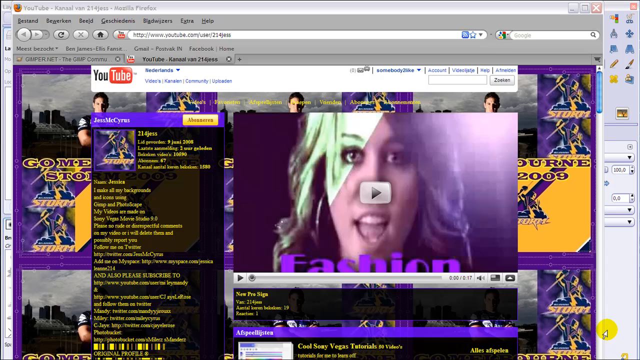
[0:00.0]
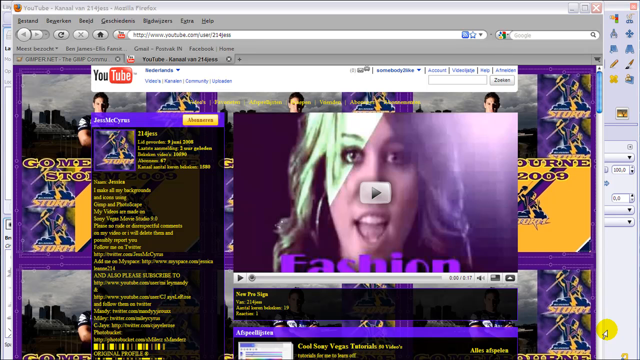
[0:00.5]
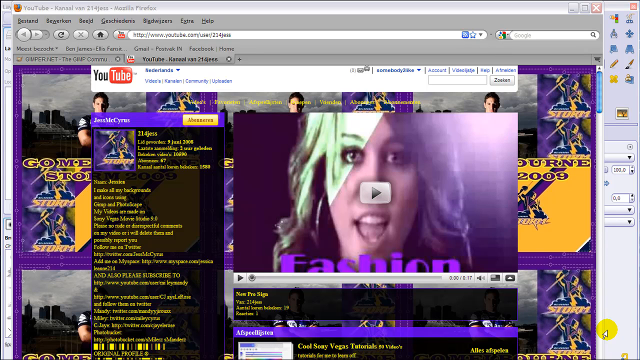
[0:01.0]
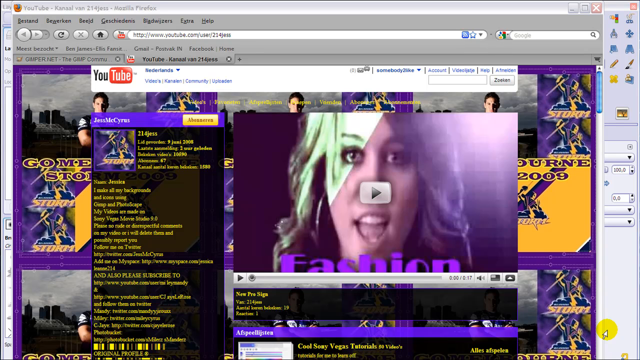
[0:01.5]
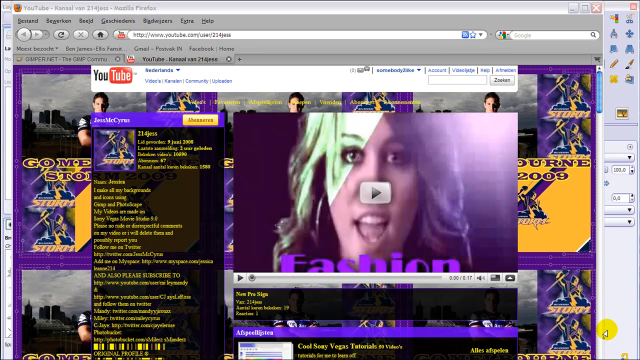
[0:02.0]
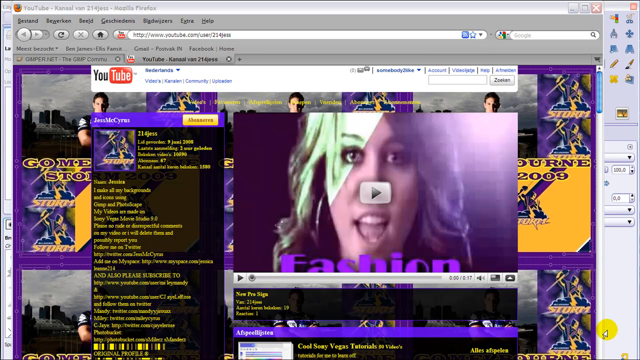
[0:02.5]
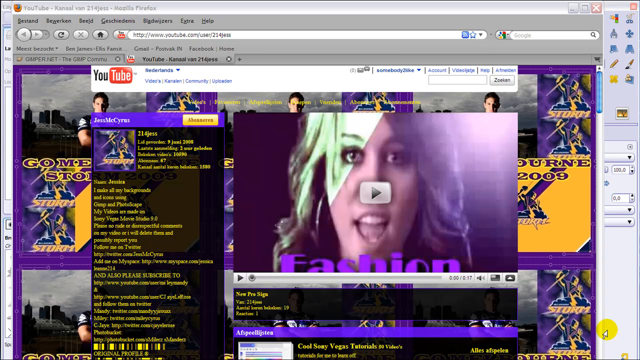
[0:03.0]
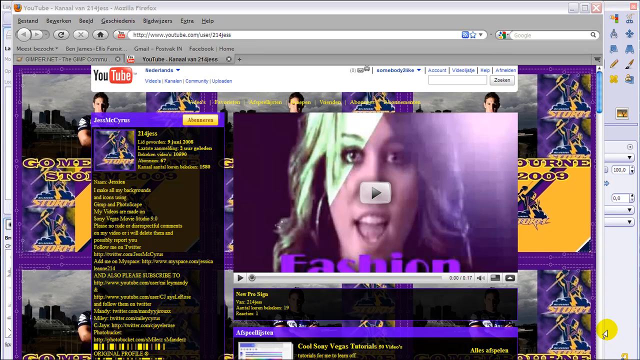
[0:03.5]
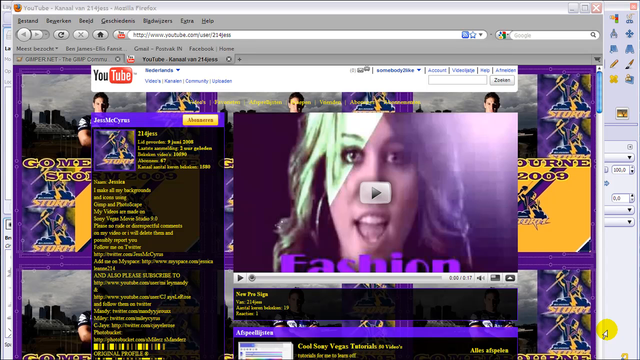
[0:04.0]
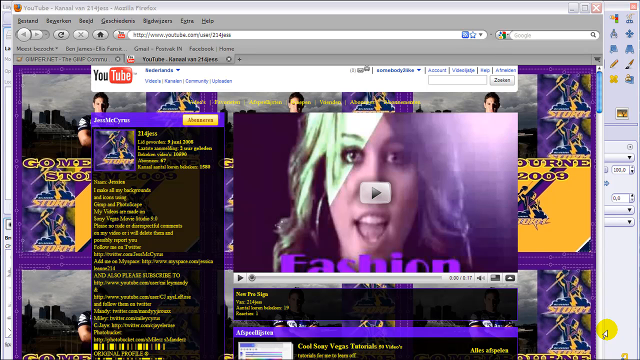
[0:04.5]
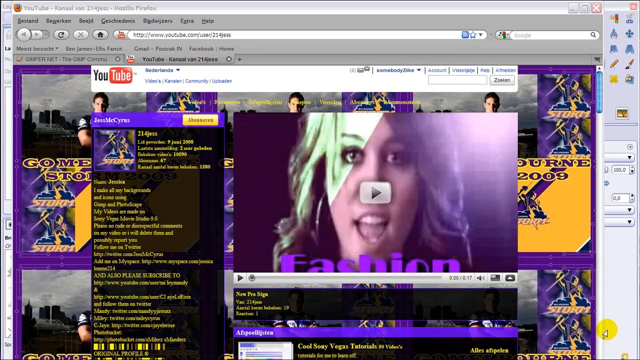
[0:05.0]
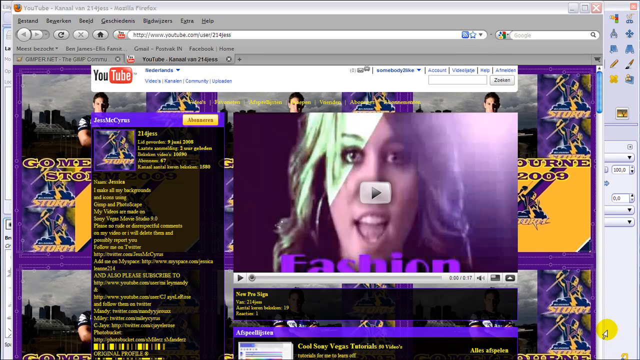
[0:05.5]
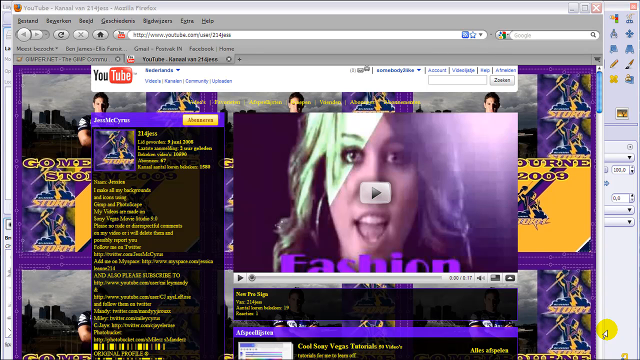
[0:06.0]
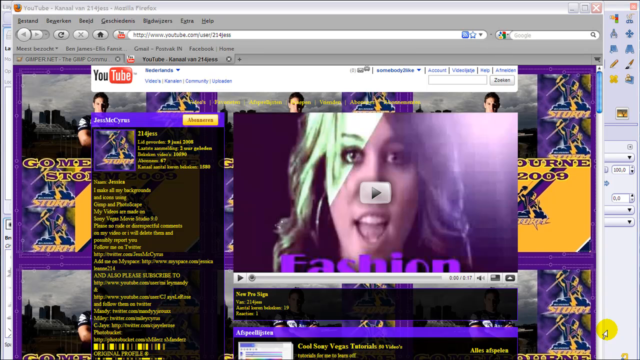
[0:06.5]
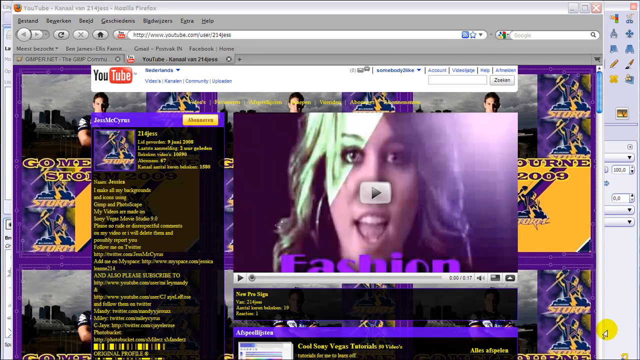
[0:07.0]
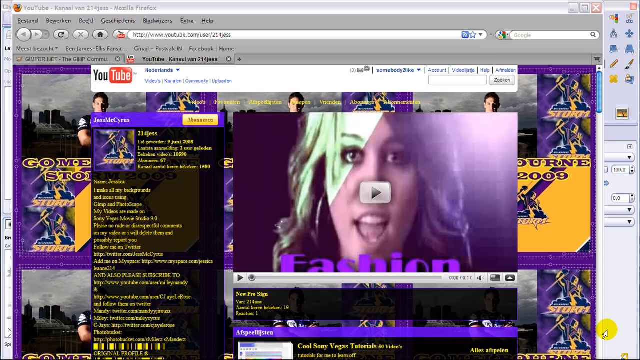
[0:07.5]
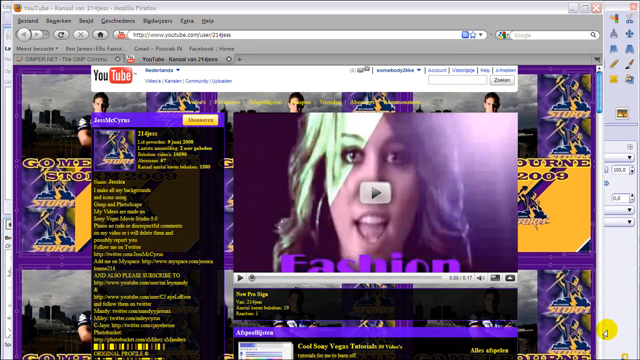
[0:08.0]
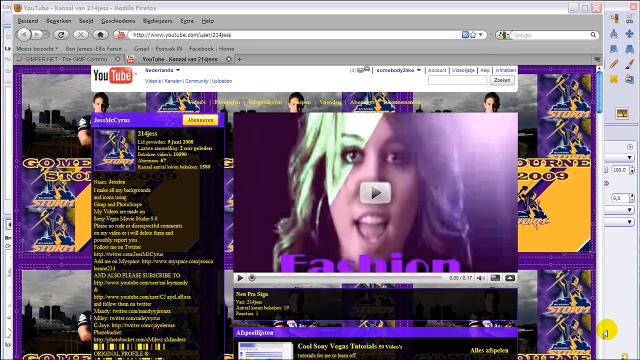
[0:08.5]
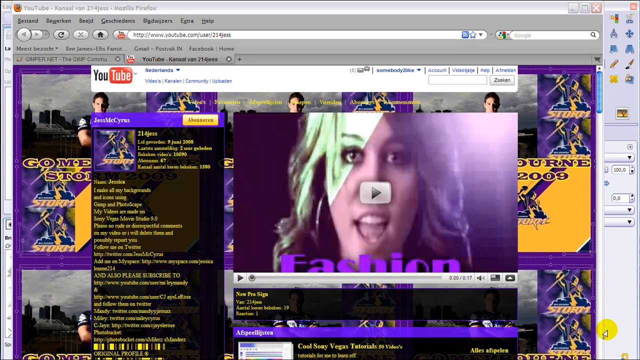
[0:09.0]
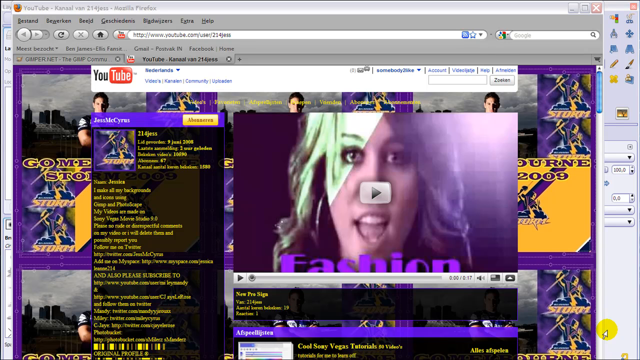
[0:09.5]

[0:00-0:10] A screen grab shows a vintage web browser, Firefox, open to a very old version of YouTube on a YouTube channel's profile. The page background is a football player with a football team logo that says "Storm" and shows a man throwing a lightning bolt from the top of a cloud. The left part of the screen shows the profile in a semi-transparent box, and the right half shows a video with a large silver play button and a picture of a woman who seems to be talking towards the camera.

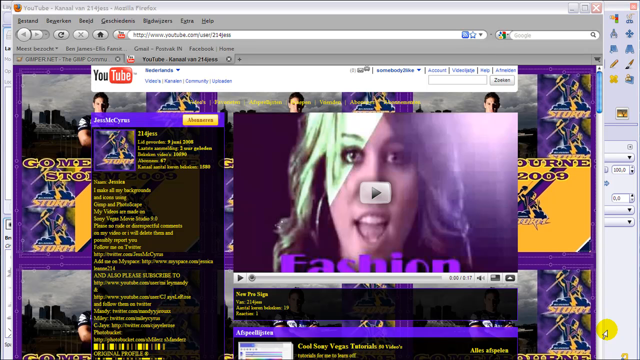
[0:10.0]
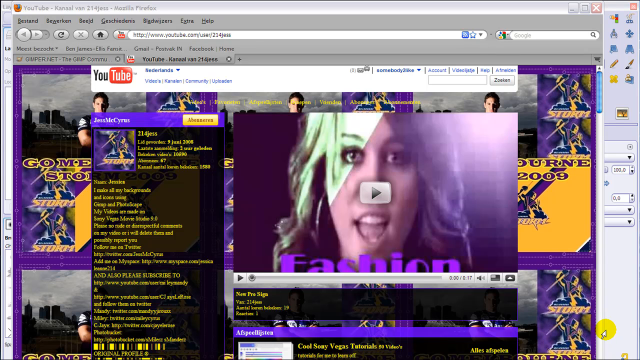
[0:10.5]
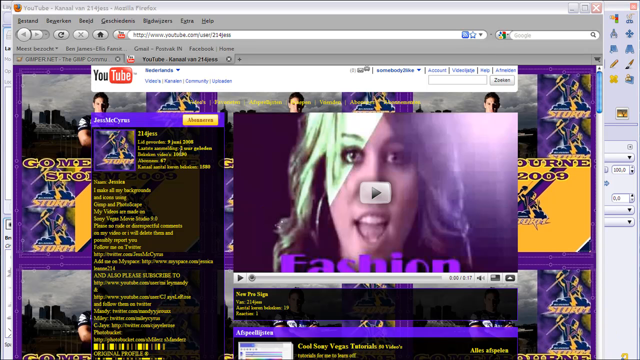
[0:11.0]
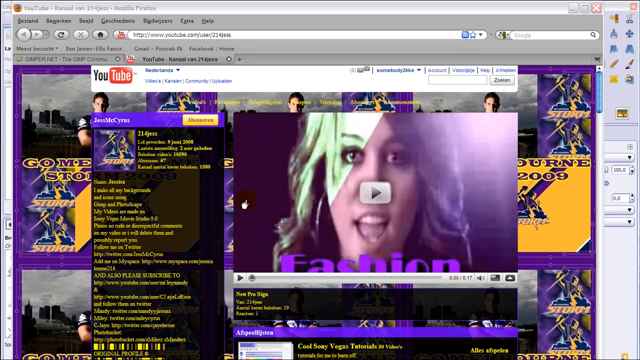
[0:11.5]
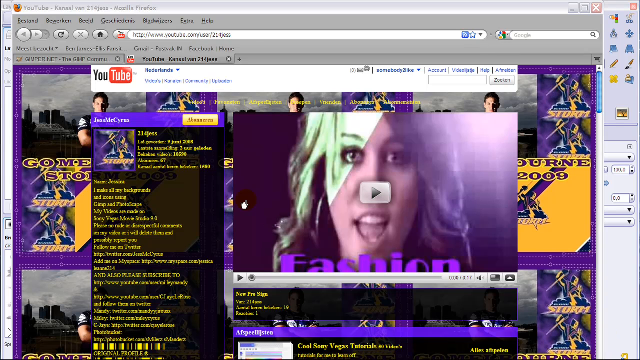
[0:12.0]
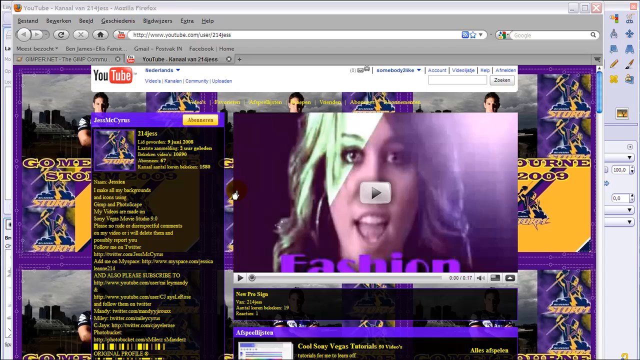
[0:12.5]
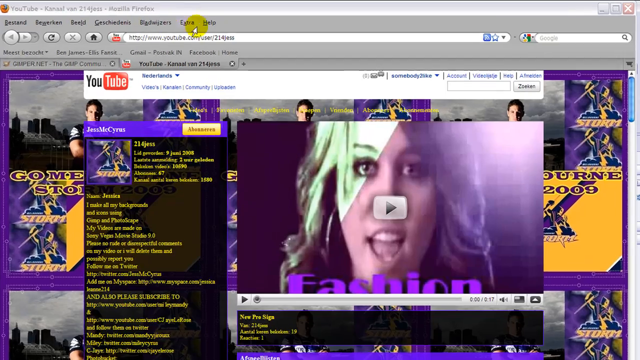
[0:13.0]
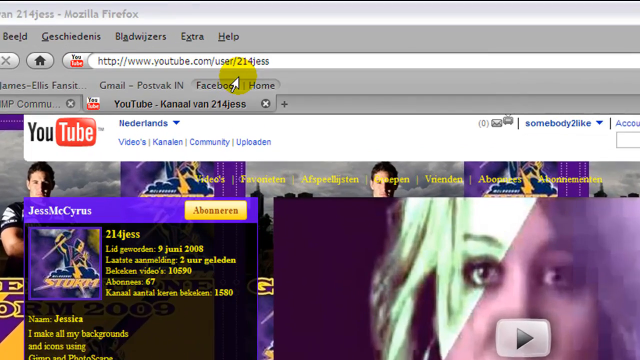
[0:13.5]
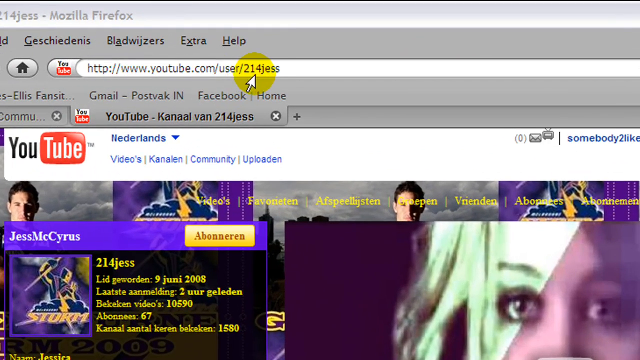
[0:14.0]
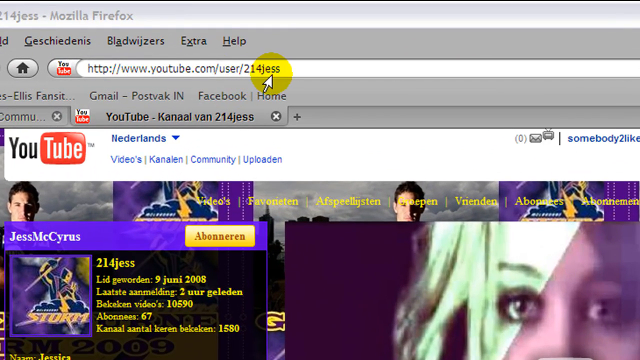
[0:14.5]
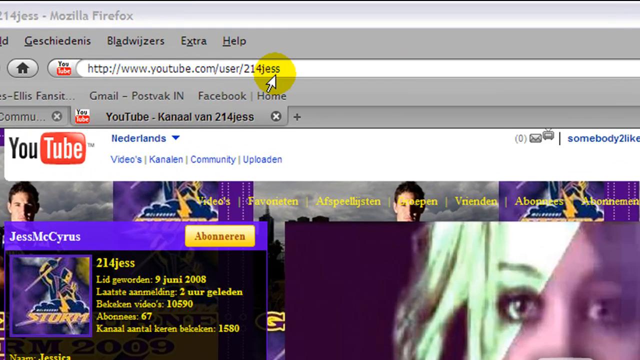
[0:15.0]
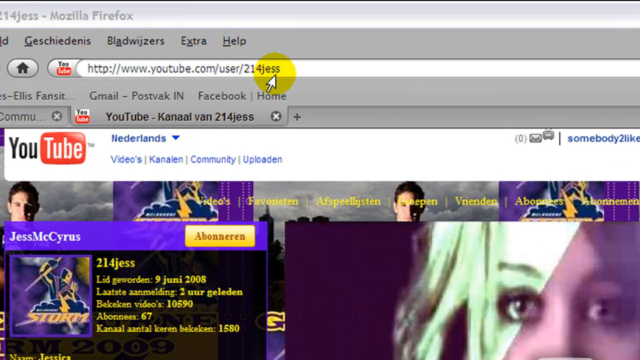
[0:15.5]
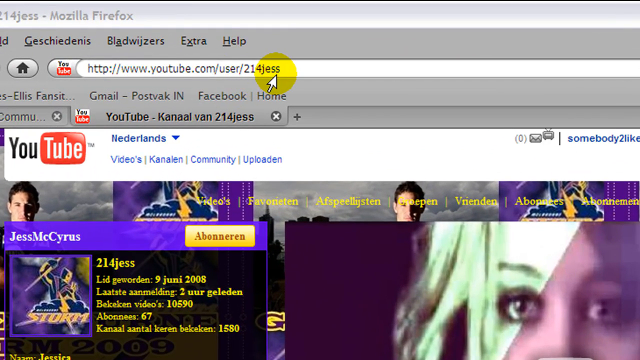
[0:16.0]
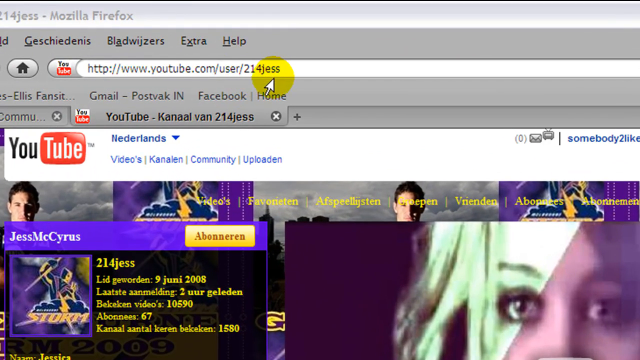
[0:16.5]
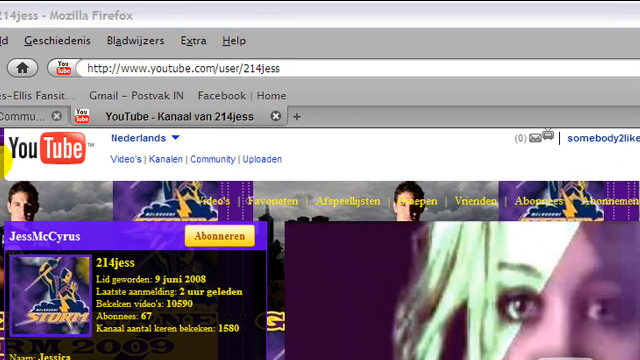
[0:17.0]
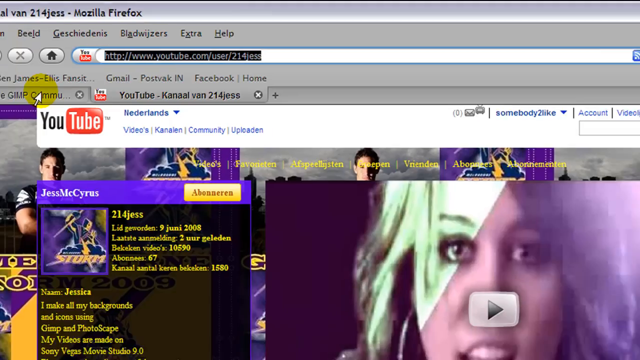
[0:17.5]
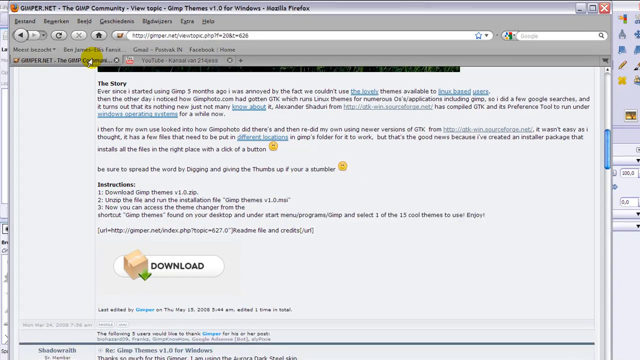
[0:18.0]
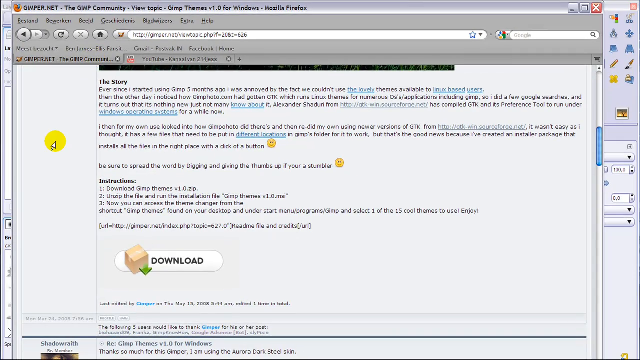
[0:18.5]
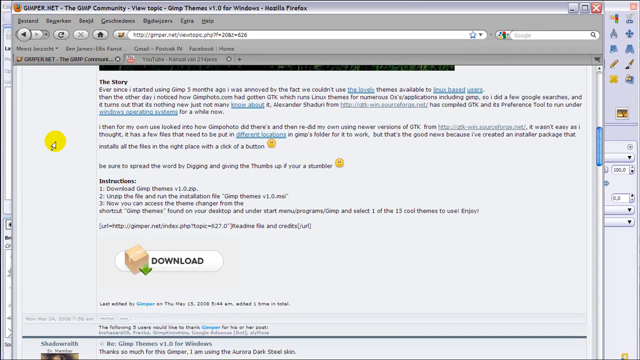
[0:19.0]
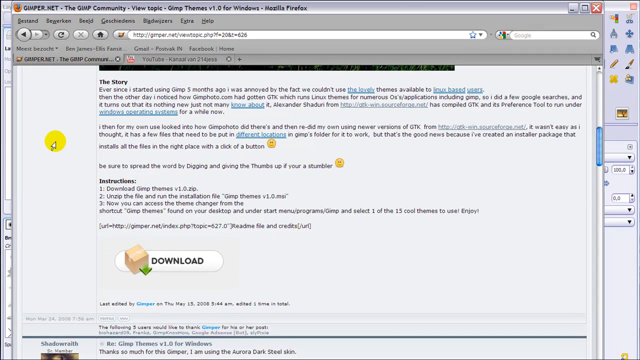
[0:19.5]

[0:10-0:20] The screen recording stays on the very old version of YouTube, where someone is using Firefox to look at a YouTube profile. The mouse cursor waves around the screen in circles. The view then zooms into the URL, and a yellow circle surrounds the mouse pointer. The pointer indicates the URL, which reads "http://www.youtube.com/.user/.214jess", and the word "jess" in the profile name within the URL is highlighted. The cursor then moves to the left and the view zooms out as a different tab is clicked, showing a long line of text on a different webpage.